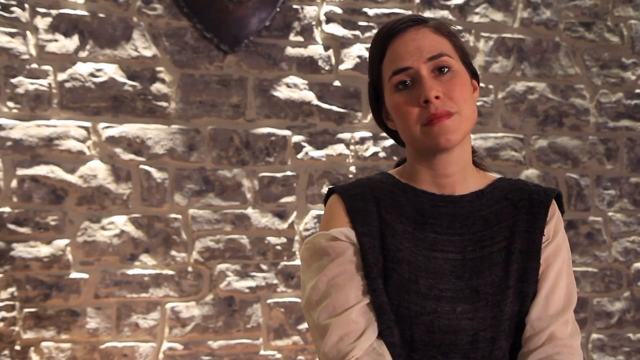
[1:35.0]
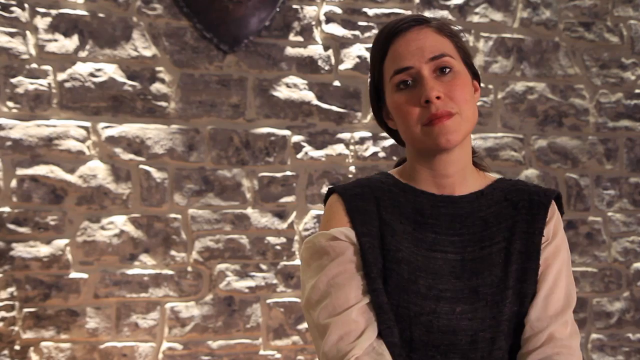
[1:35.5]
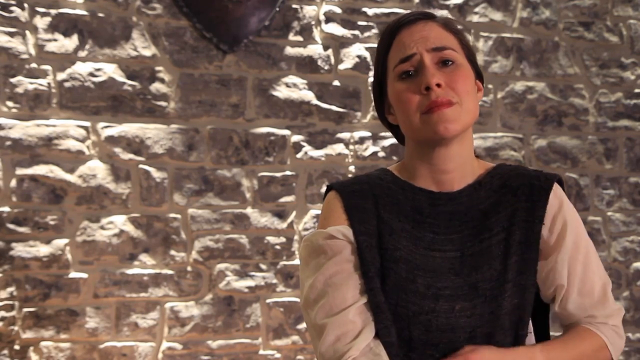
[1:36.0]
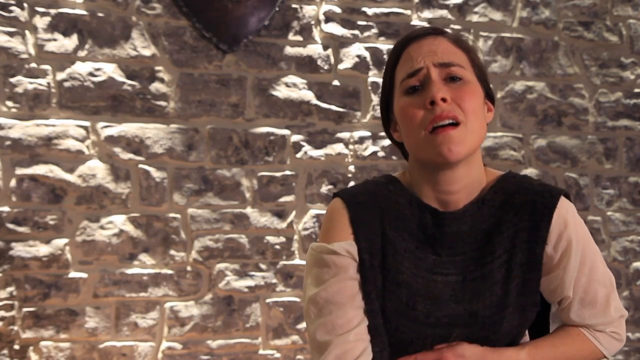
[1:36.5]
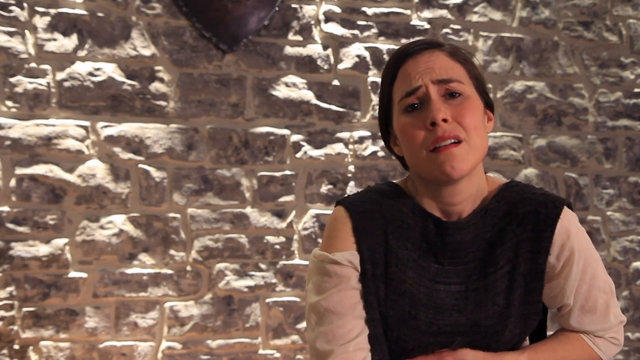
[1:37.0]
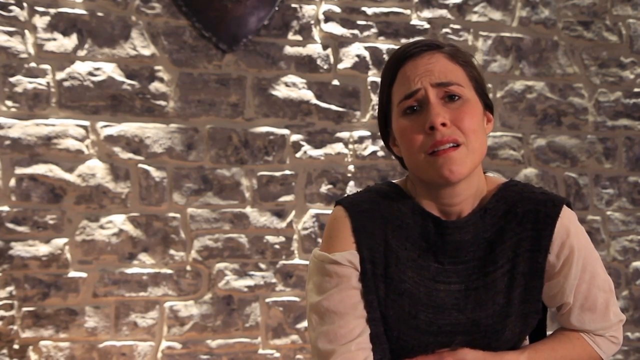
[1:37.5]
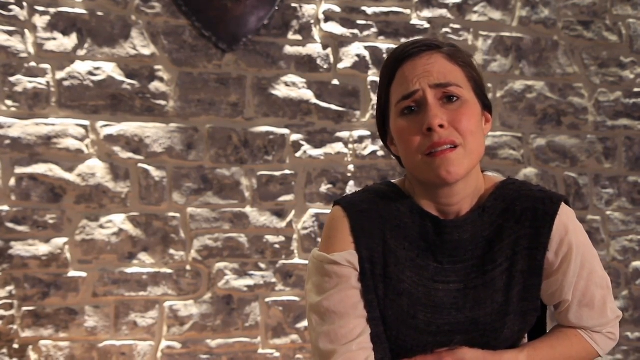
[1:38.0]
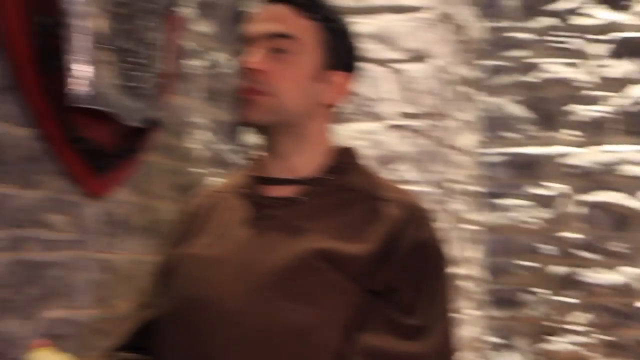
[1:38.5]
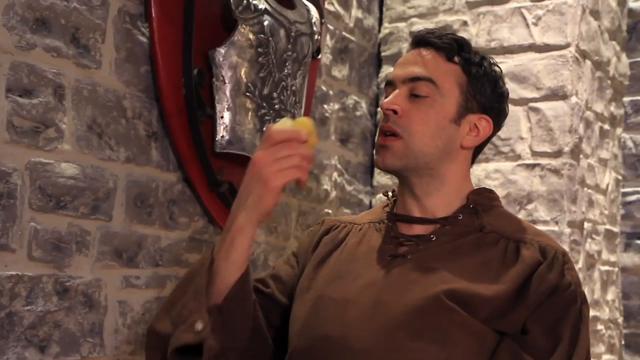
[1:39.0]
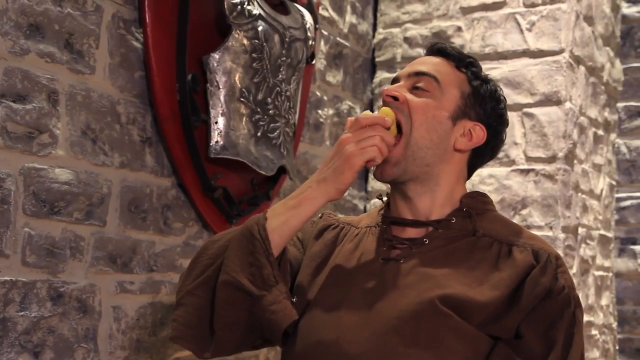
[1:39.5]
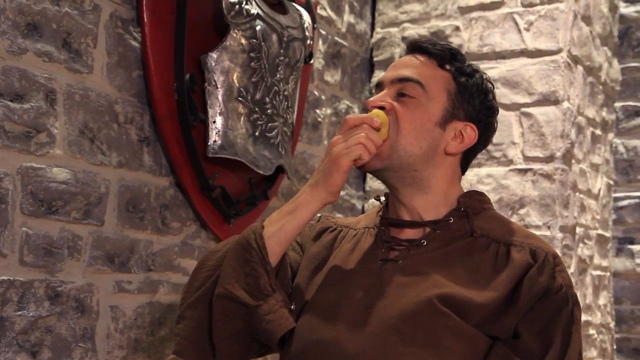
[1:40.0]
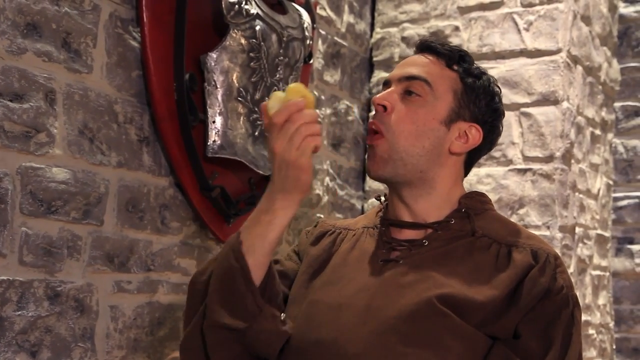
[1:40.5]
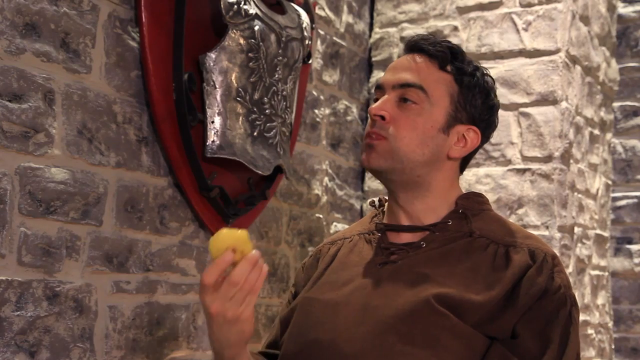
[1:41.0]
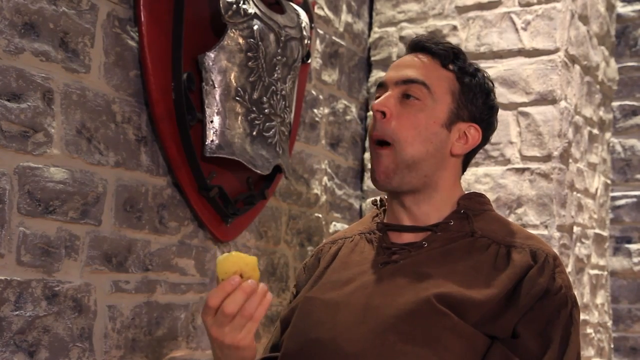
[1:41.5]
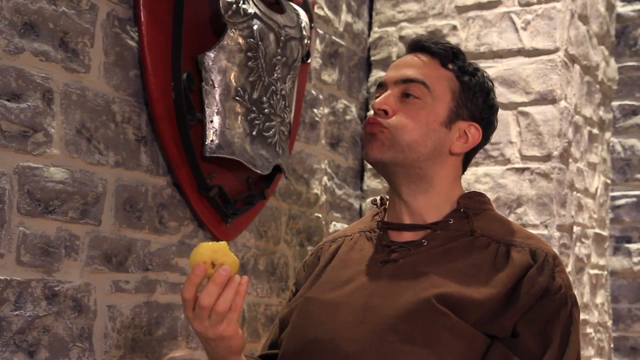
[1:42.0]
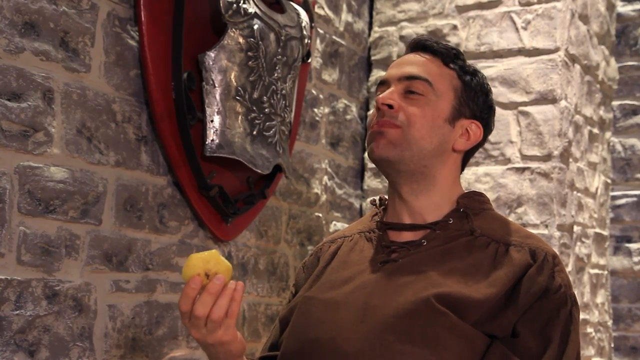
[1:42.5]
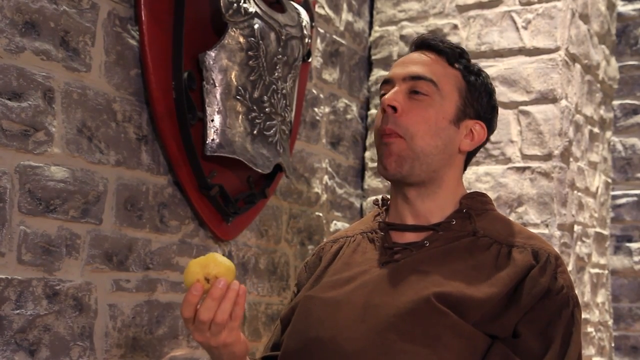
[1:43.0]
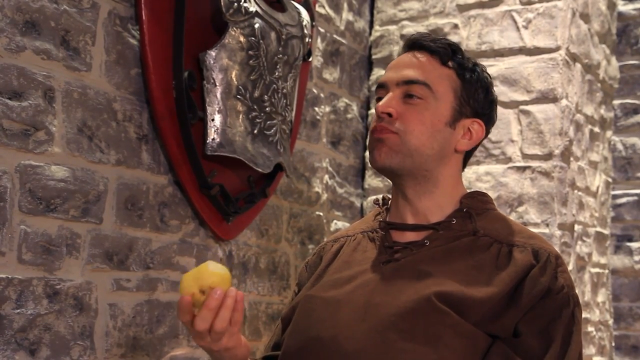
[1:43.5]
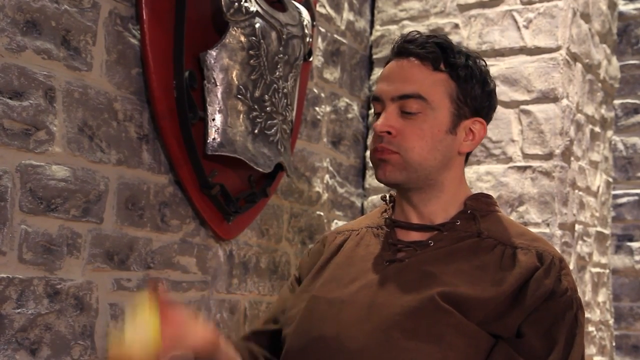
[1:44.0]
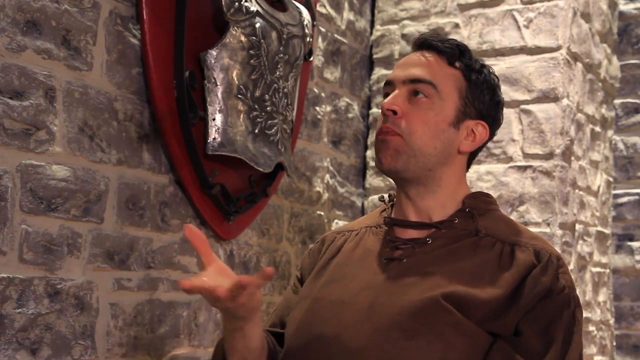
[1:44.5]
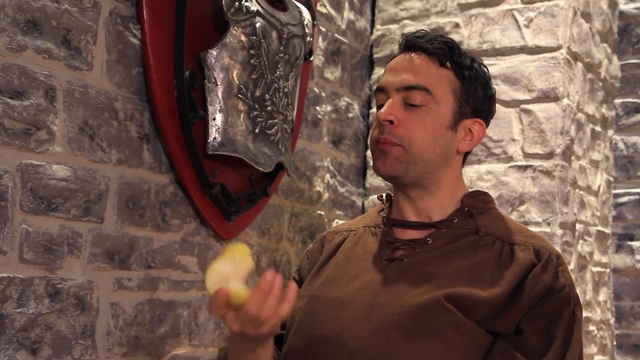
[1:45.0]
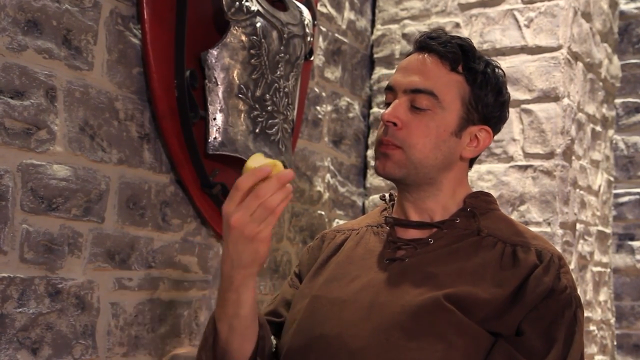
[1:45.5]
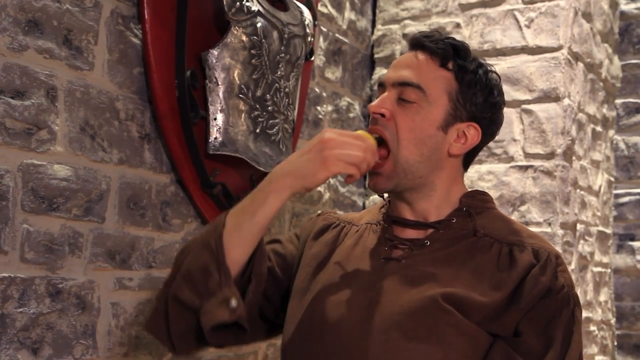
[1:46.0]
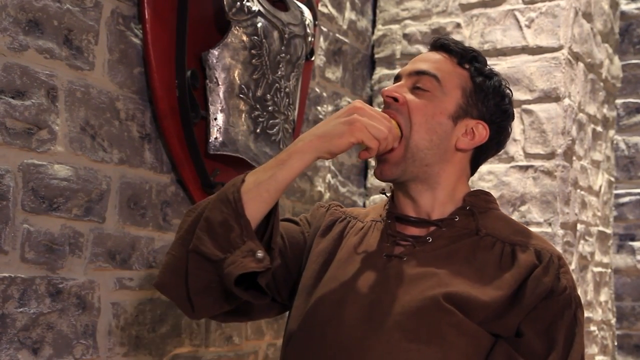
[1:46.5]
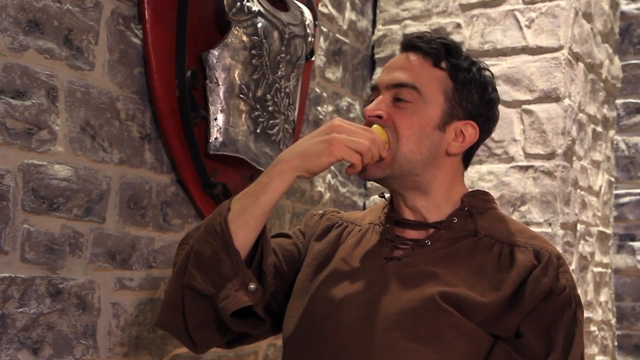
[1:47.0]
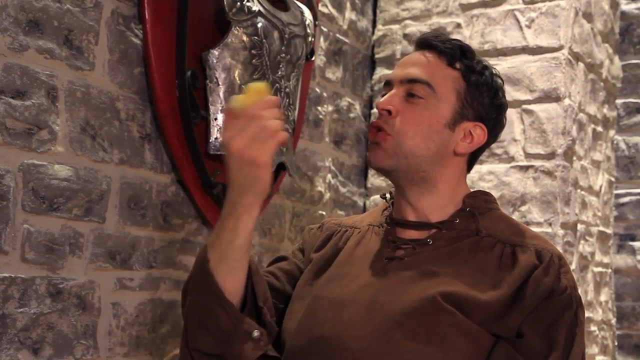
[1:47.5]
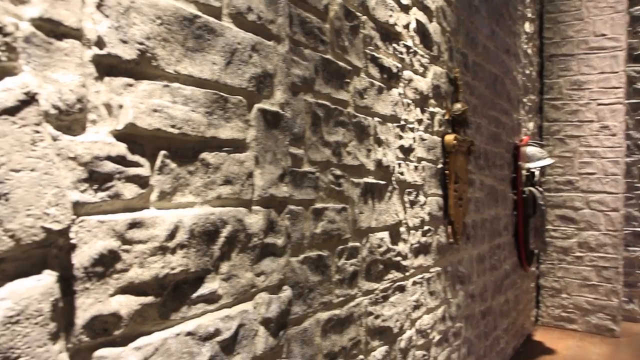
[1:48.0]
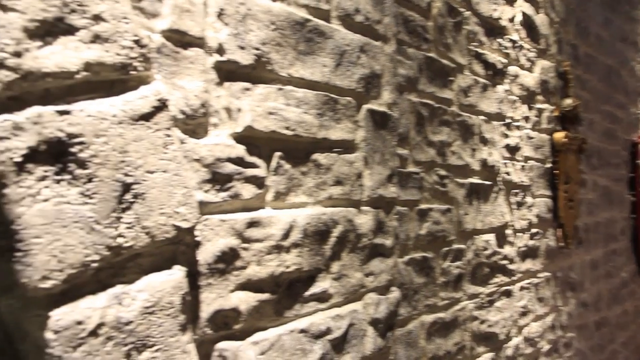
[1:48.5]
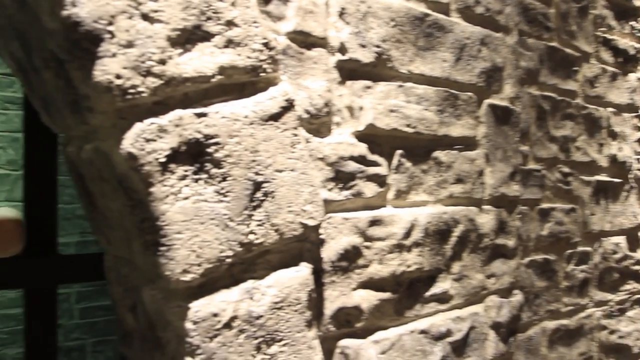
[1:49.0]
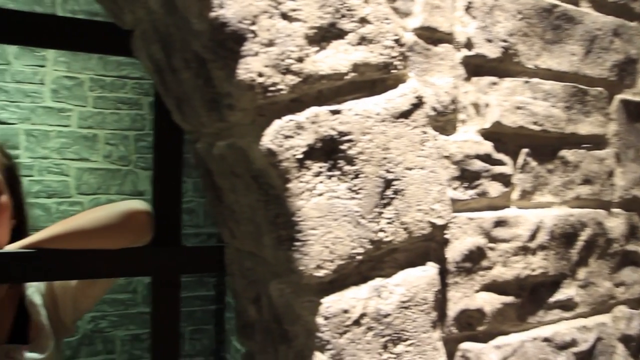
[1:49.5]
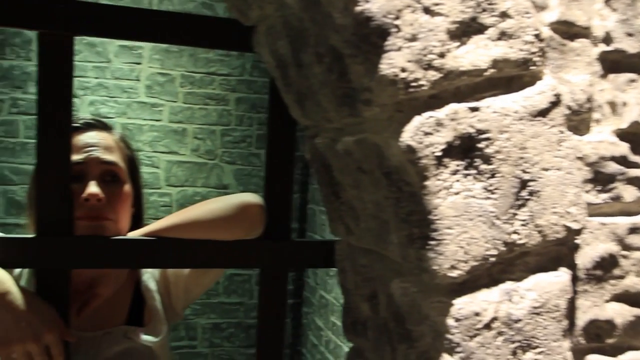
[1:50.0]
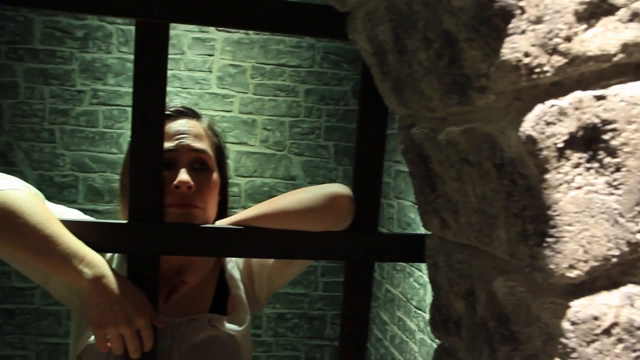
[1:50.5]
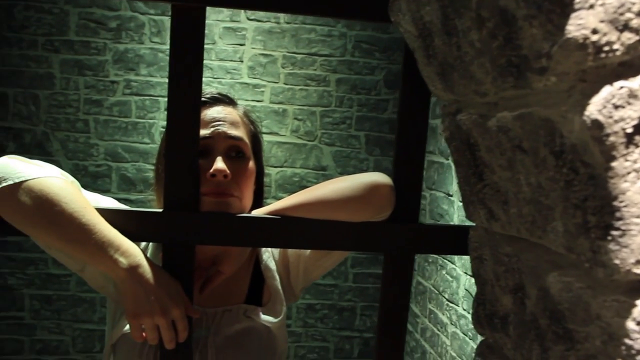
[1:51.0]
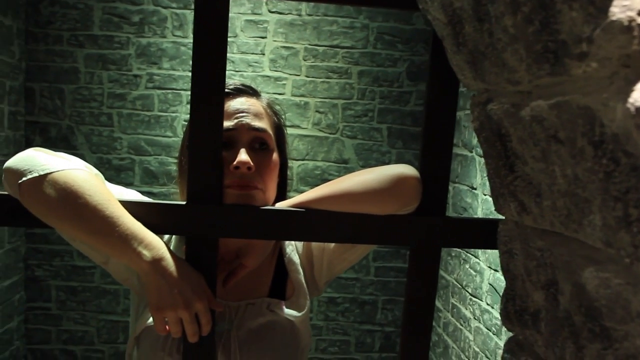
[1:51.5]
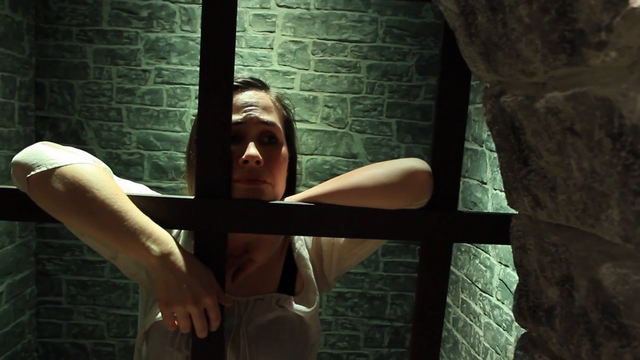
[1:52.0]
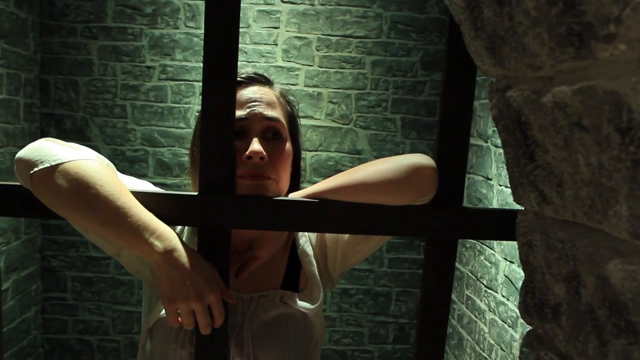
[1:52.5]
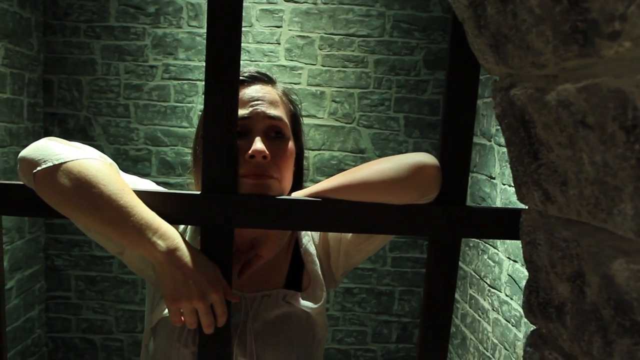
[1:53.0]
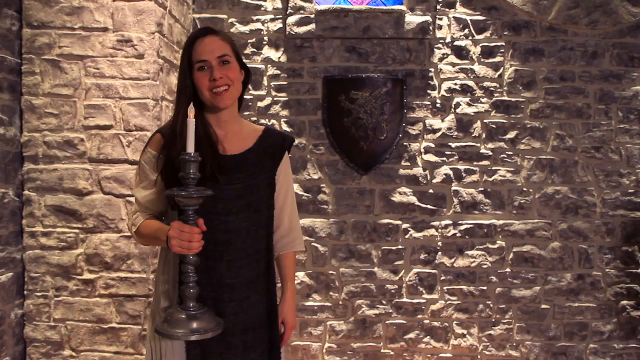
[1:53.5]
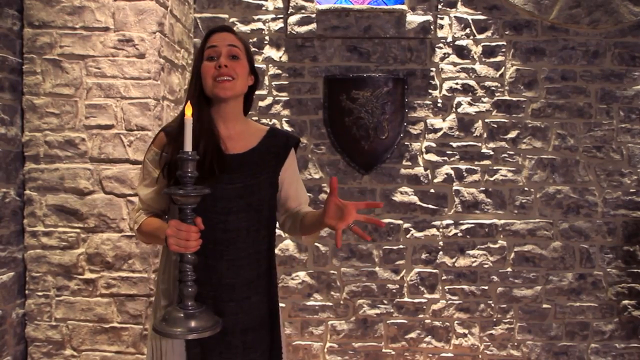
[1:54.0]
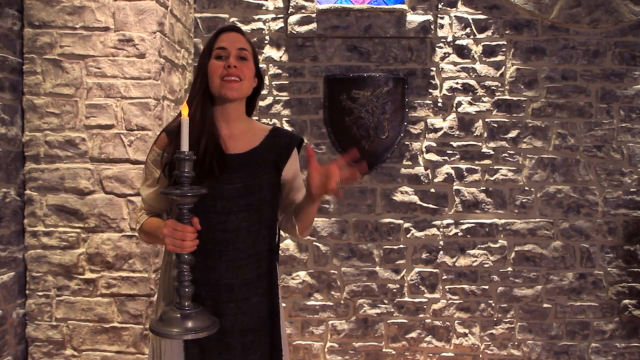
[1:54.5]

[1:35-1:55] The woman in the peasant outfit puts her hand on her stomach and looks upset, as if it hurts. The camera pans over to the man in the peasant outfit eating an apple and looking very happy; while eating, he throws the apple up in the air. The video then cuts to the woman in the peasant outfit in a prison cell with iron bars in the castle basement, where everything looks very medieval; she has her arms up on the bars and looks very unhappy. Next, the woman stands in a castle room, her hair down, holding a candle on an iron candelabra, looking fine as she talks to the camera and gestures with her hand.